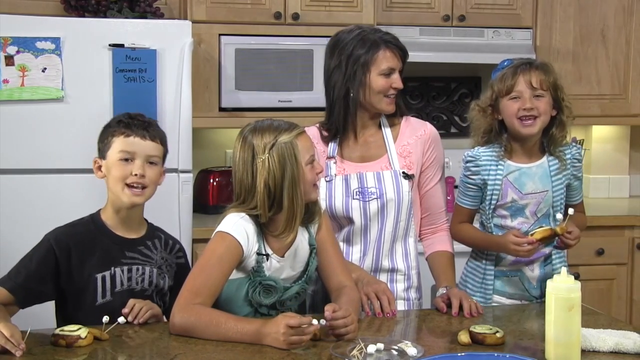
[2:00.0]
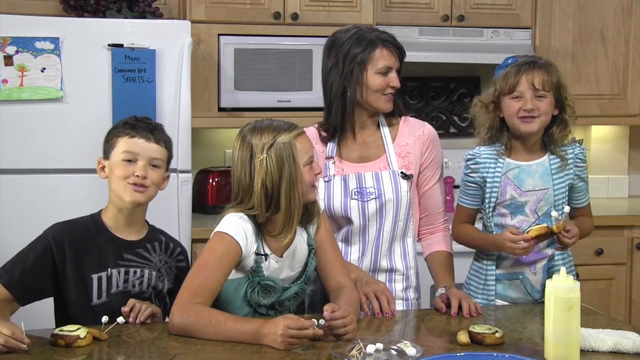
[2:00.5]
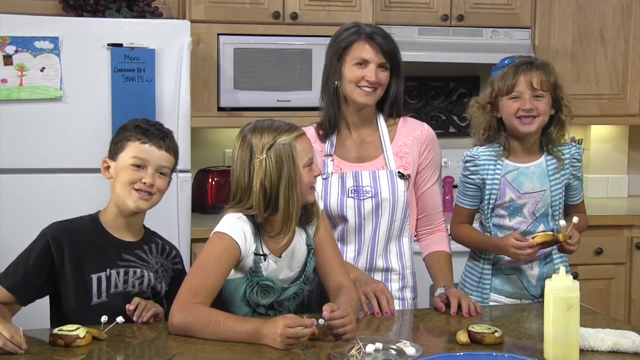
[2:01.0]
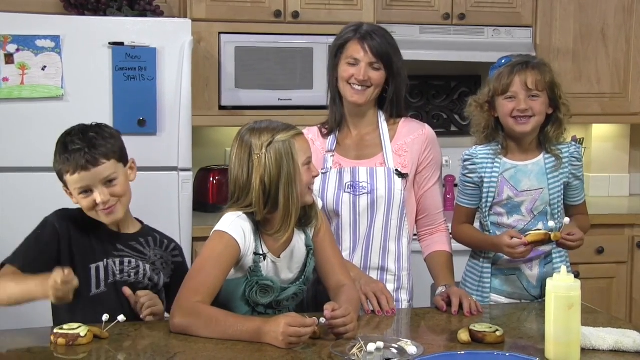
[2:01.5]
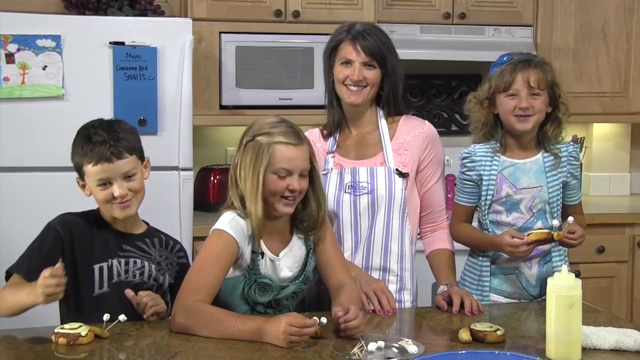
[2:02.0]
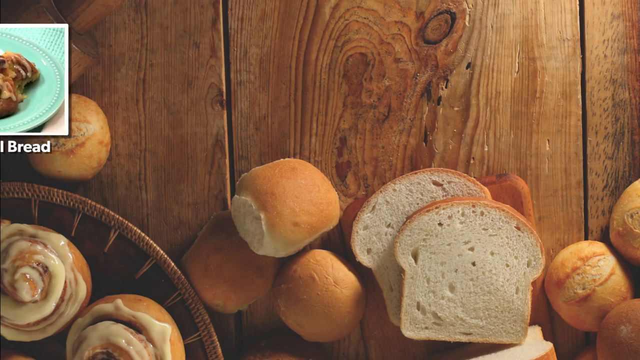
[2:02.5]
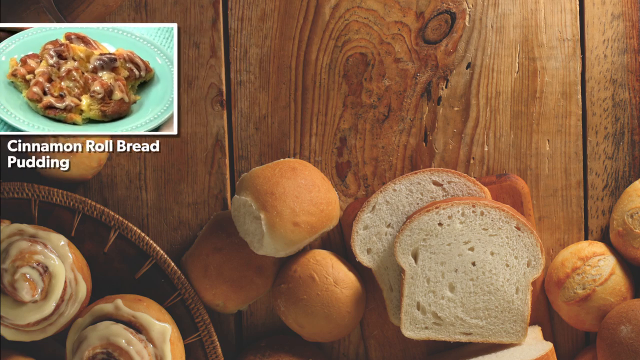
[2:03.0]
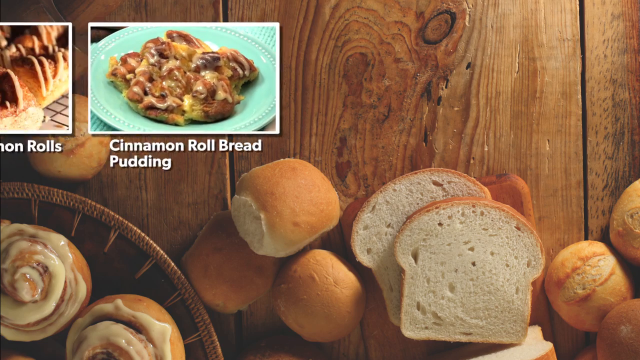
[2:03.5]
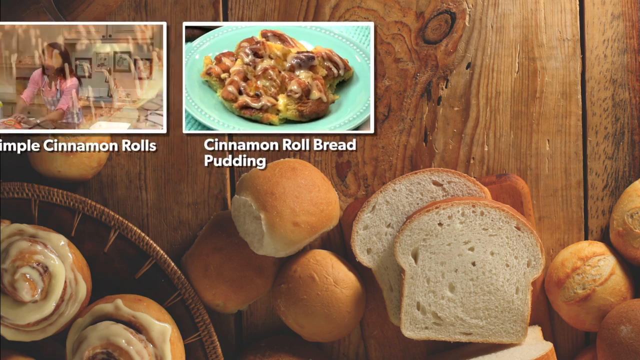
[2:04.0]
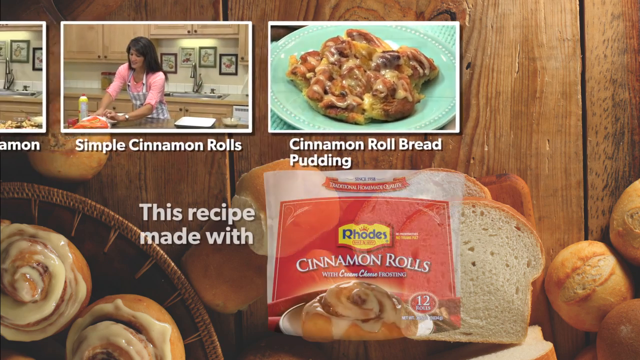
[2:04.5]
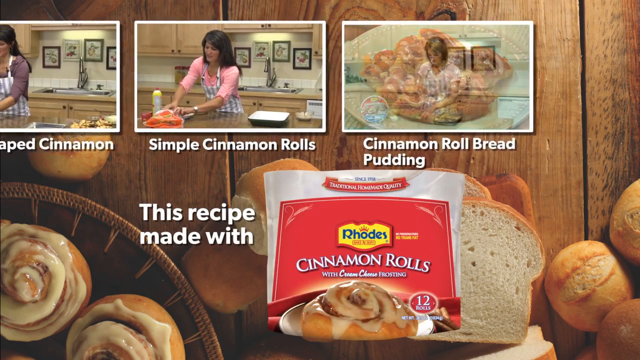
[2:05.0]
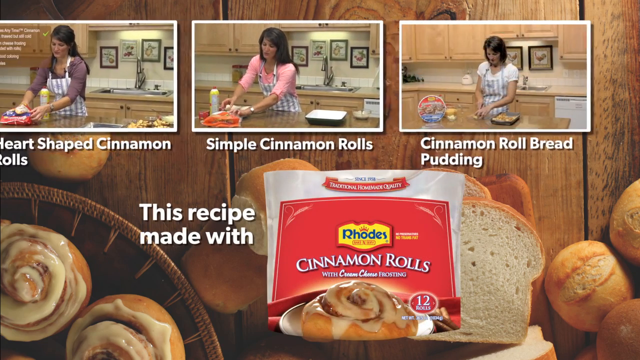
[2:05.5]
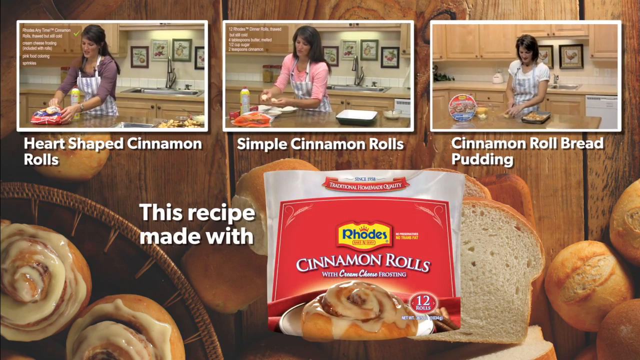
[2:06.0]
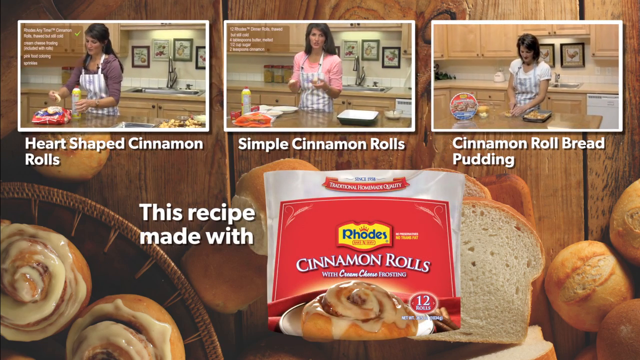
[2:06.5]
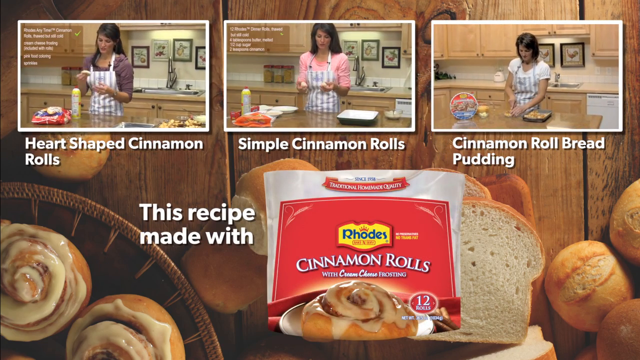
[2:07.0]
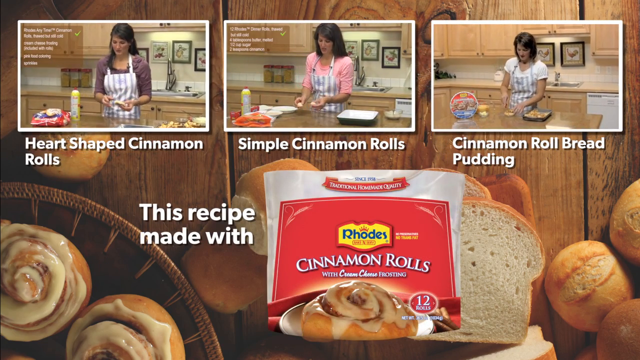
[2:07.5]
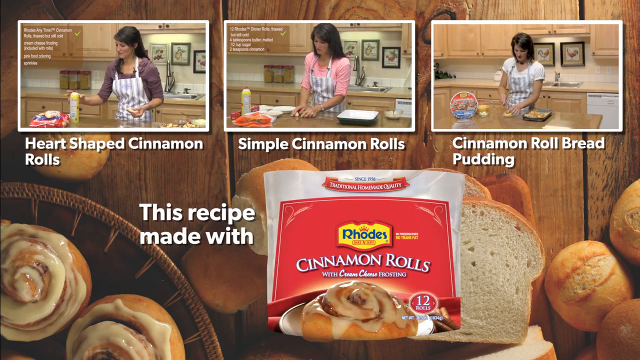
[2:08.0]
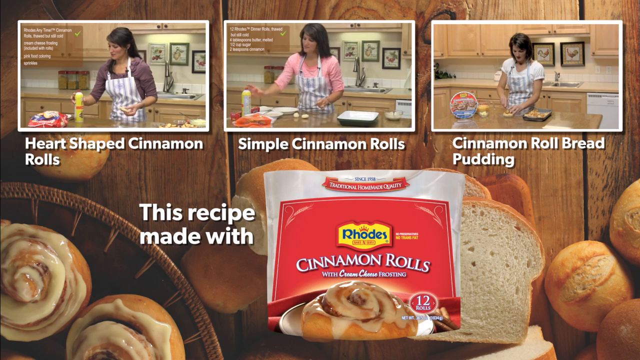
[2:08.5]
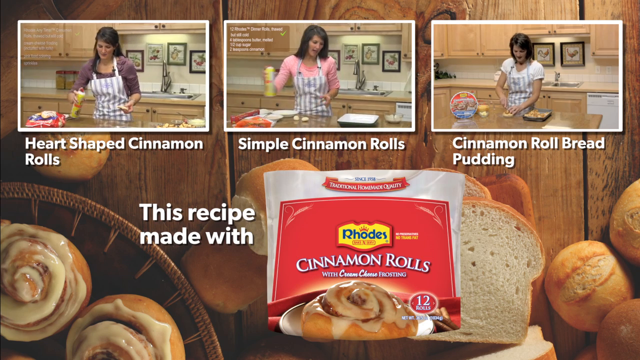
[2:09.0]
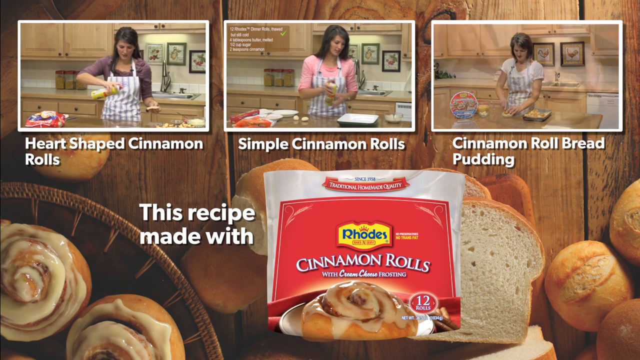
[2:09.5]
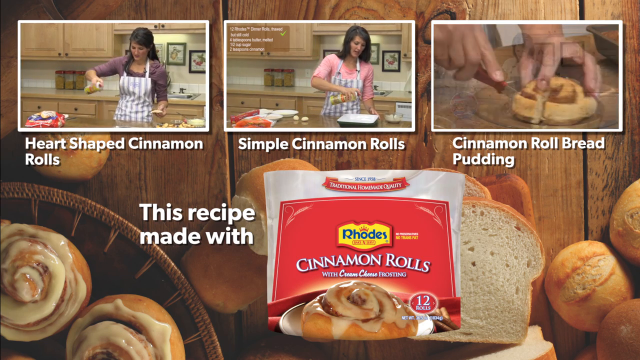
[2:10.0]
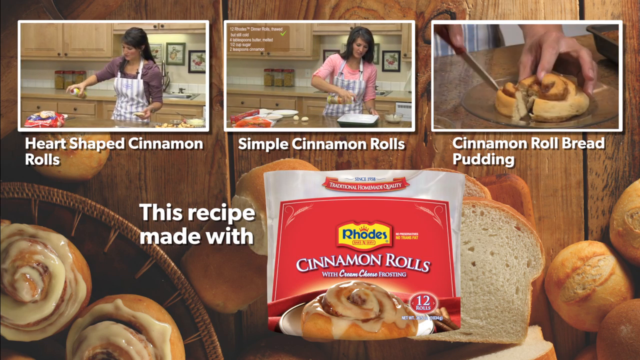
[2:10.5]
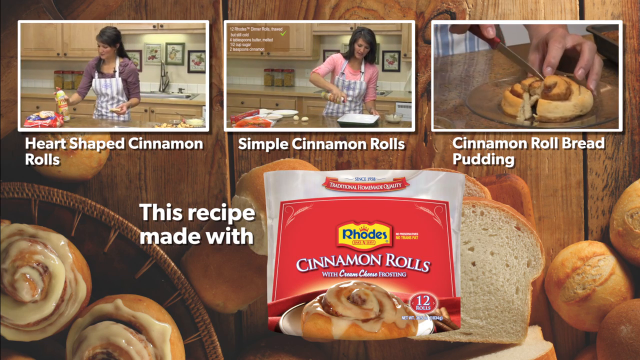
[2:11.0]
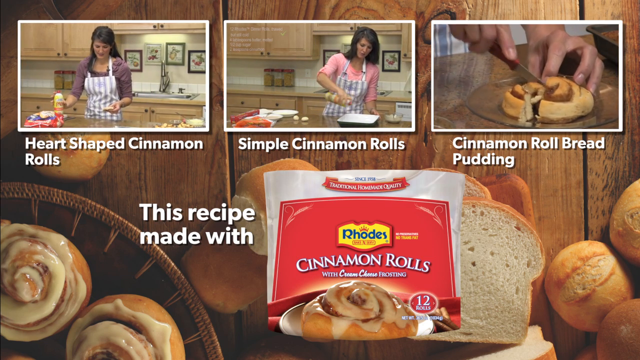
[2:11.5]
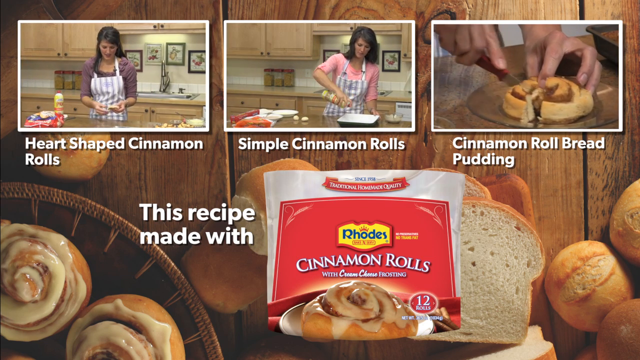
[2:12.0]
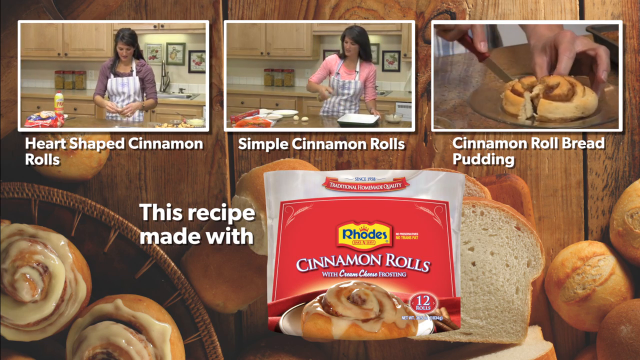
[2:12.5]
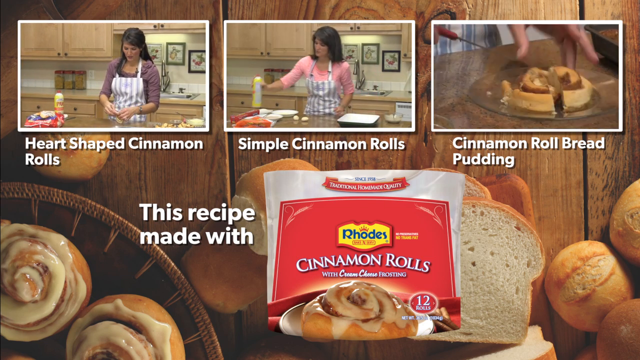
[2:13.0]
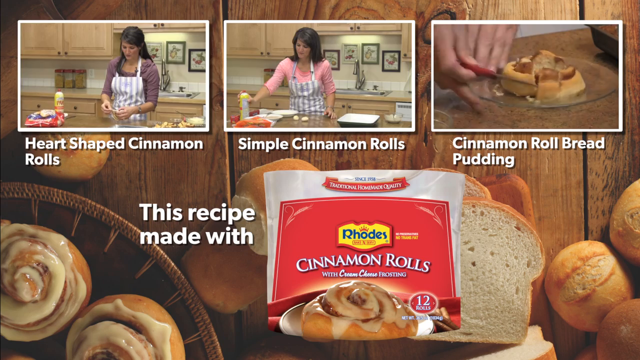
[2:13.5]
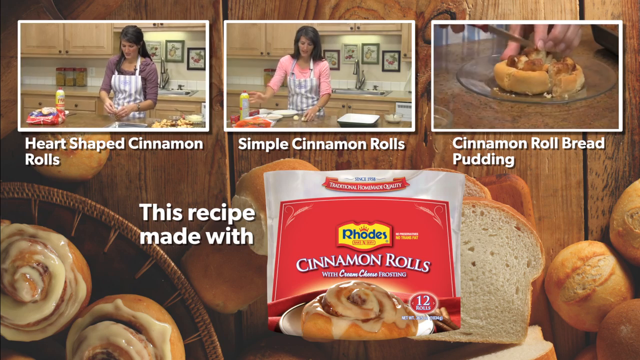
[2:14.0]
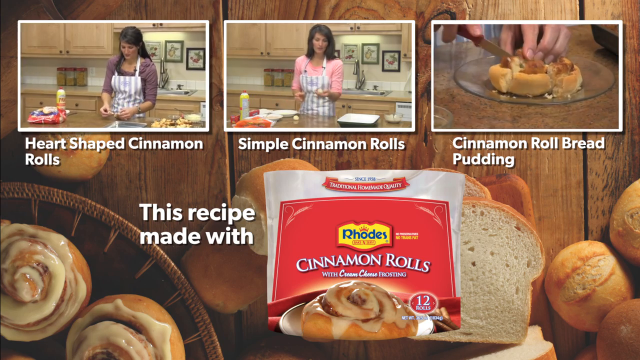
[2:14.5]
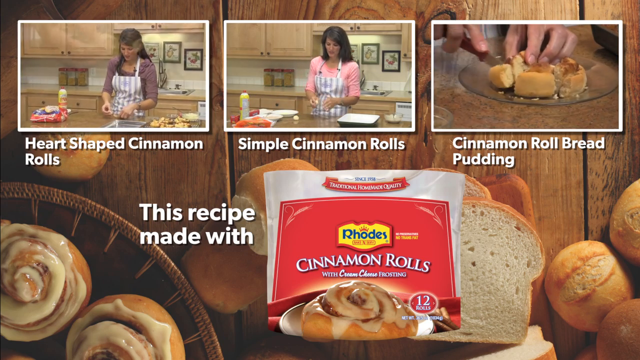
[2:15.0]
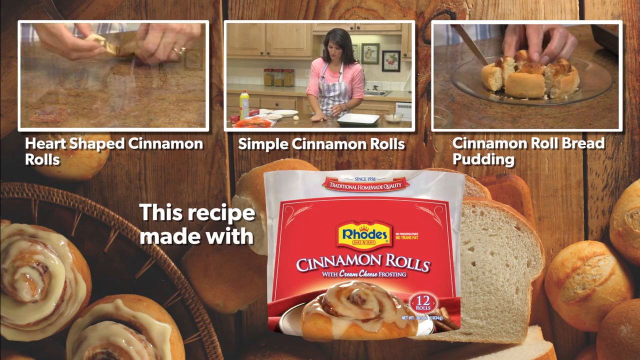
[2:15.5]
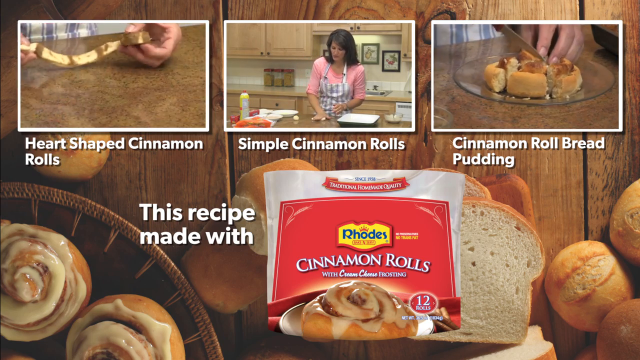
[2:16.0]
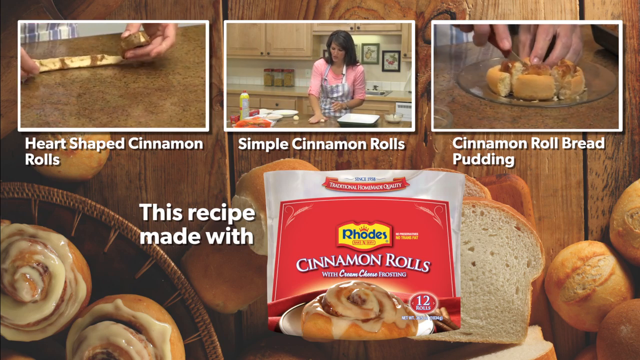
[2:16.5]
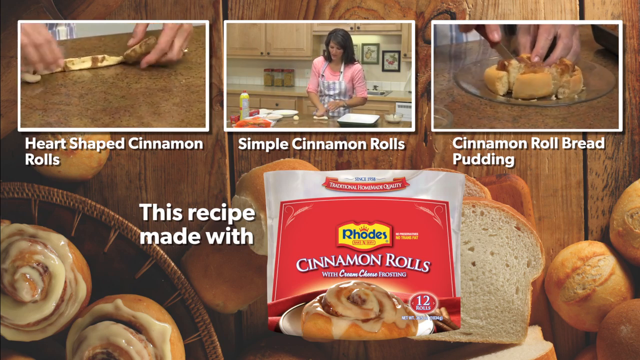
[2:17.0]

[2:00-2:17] The child still appears full of joy, and the boy on the left side dances and moves his head. The mother and her children have made snails out of the cinnamon rolls. A page follows: an image in the top left corner shows a green plate filled with what appears to be a cinnamon roll bread pudding with sauce on top. Below it is the brown table seen at the beginning, with cinnamon rolls in the bottom left corner, a bread in the middle, and baked rolls. A line of videos at the top moves from left to right: cinnamon roll bread pudding, simple cinnamon rolls and heart-shaped cinnamon rolls. Below them is the recipe made with the cinnamon rolls packaging.